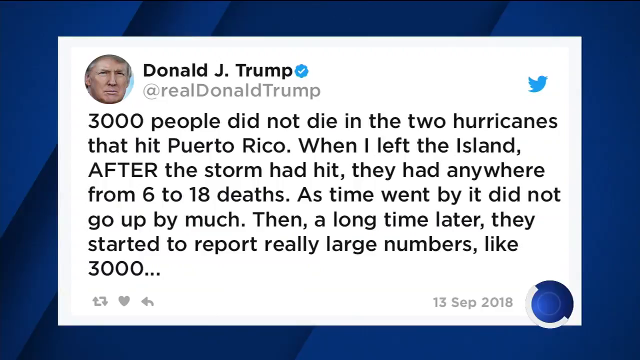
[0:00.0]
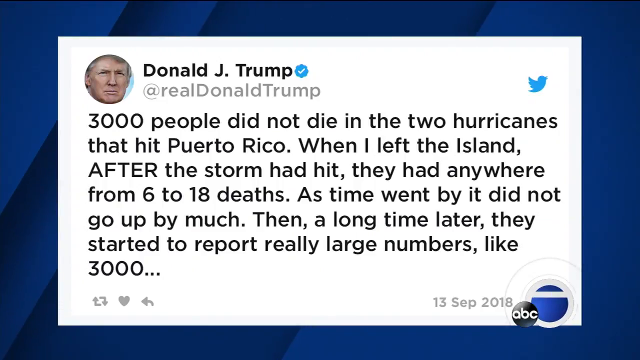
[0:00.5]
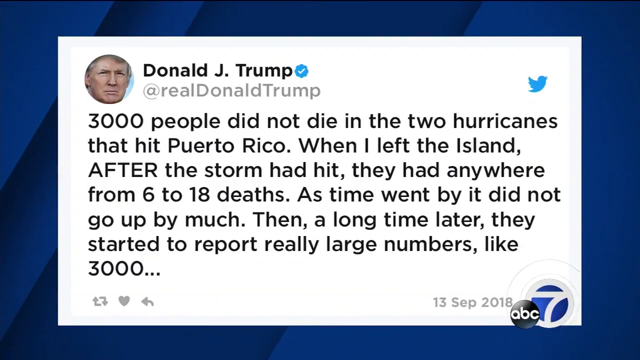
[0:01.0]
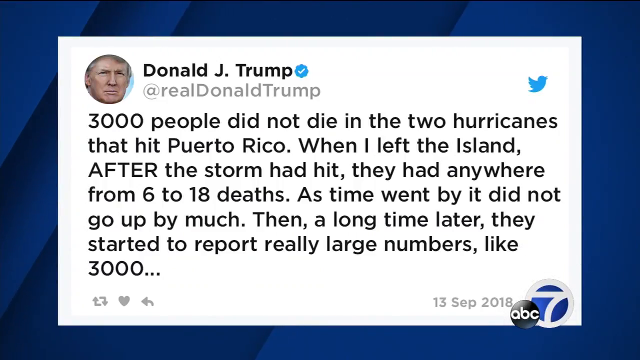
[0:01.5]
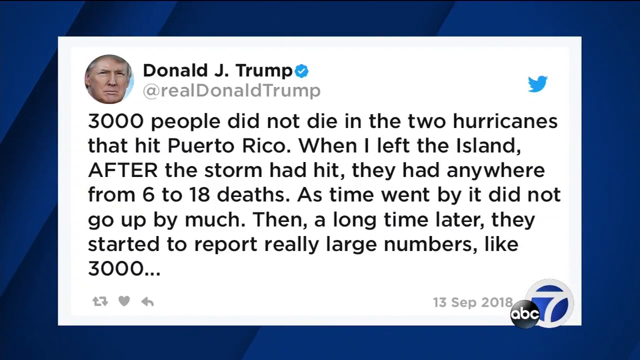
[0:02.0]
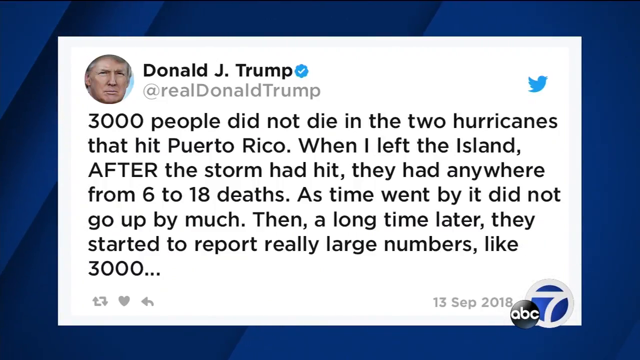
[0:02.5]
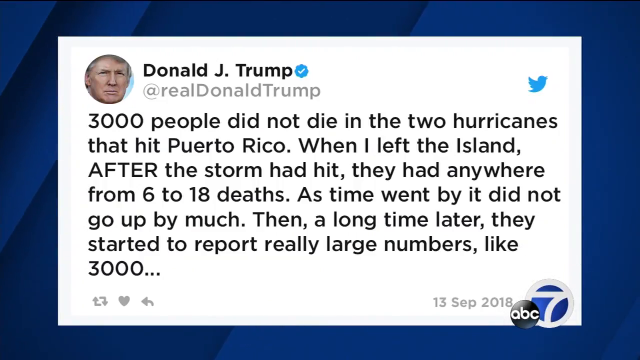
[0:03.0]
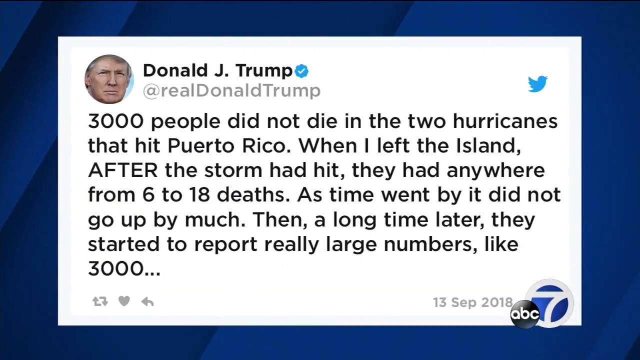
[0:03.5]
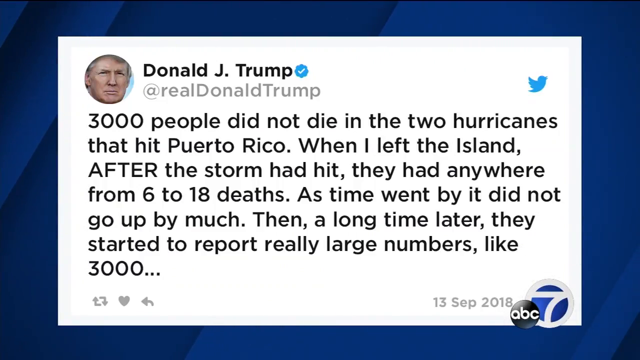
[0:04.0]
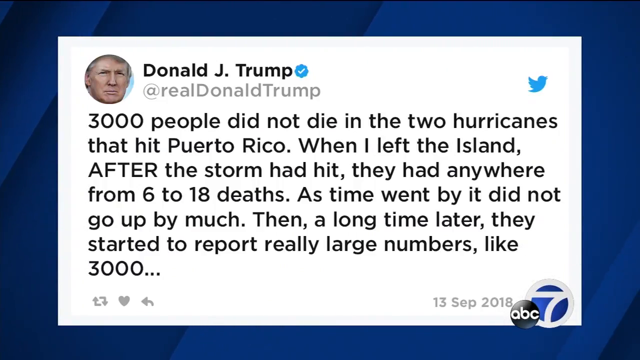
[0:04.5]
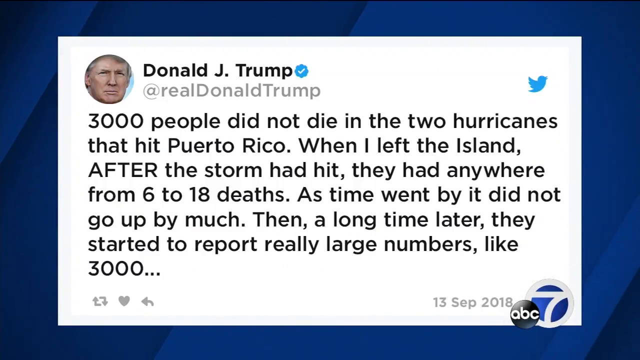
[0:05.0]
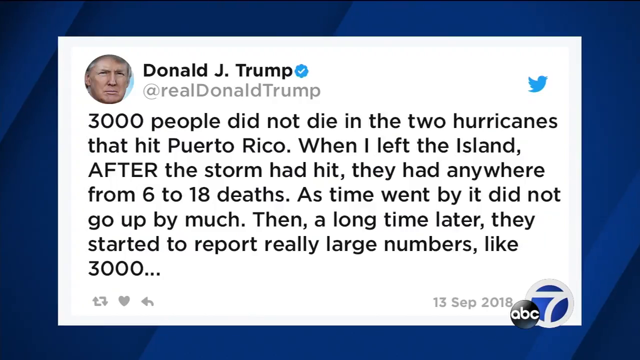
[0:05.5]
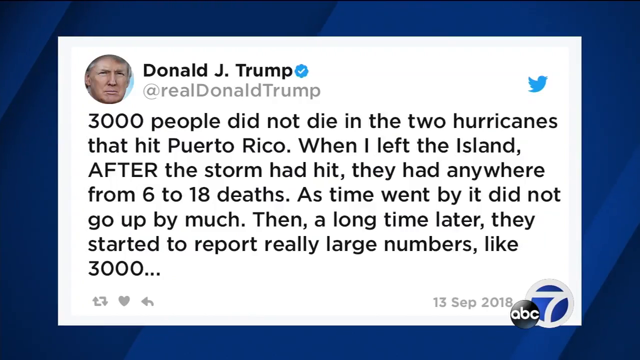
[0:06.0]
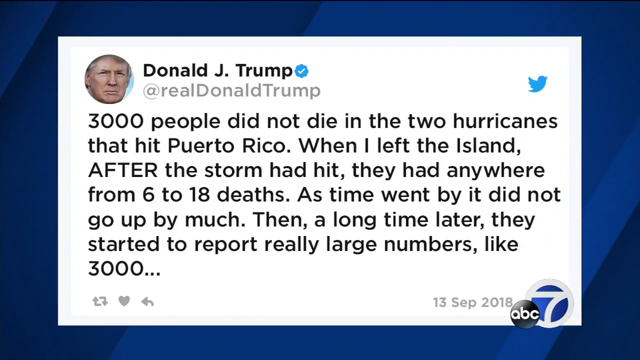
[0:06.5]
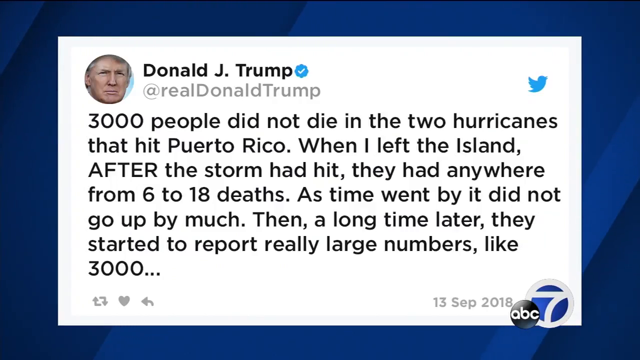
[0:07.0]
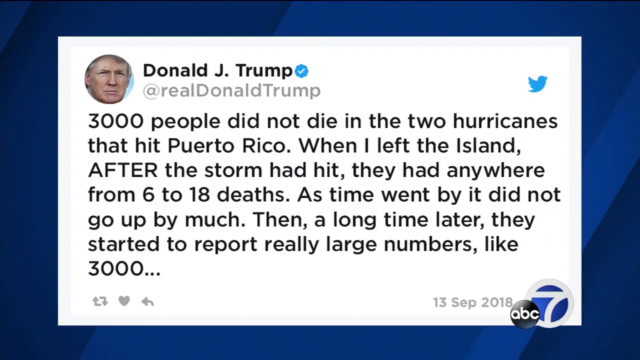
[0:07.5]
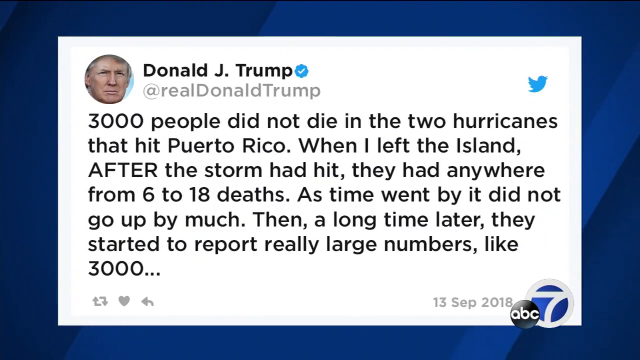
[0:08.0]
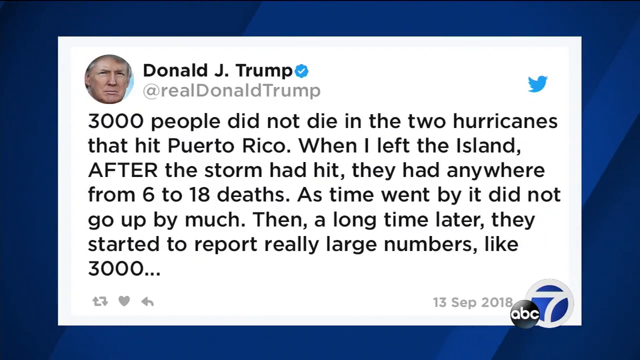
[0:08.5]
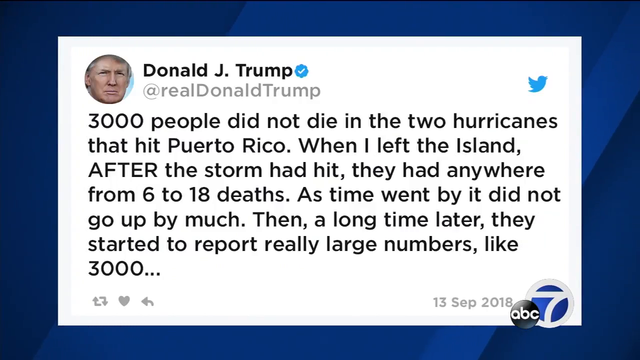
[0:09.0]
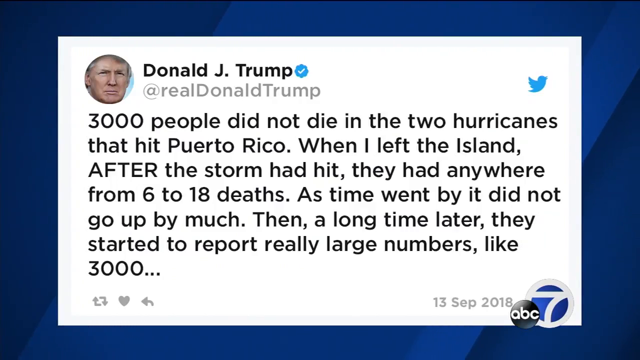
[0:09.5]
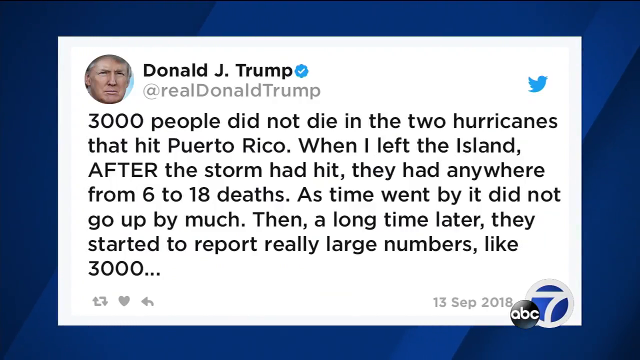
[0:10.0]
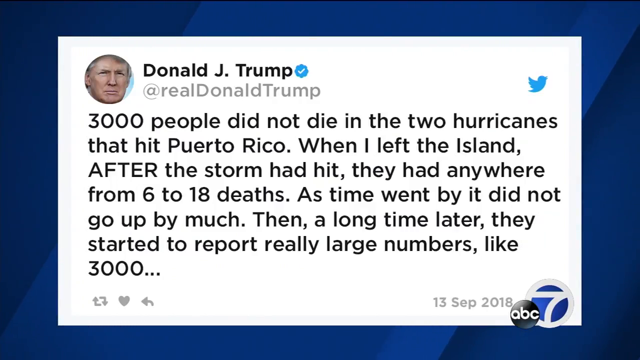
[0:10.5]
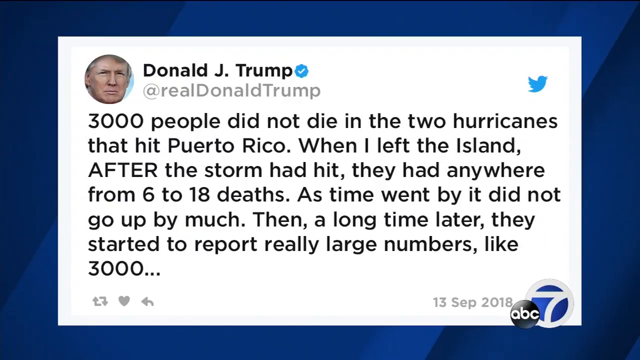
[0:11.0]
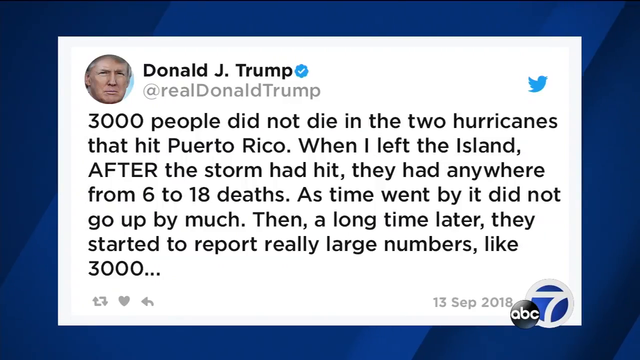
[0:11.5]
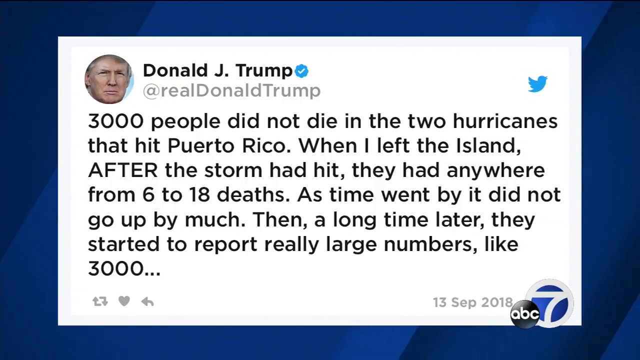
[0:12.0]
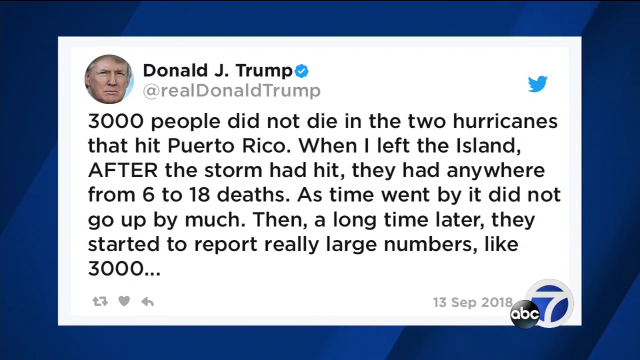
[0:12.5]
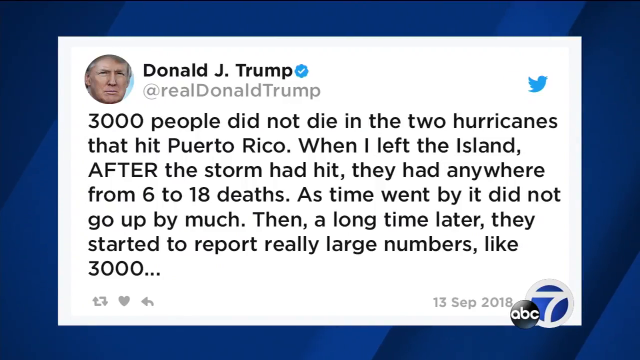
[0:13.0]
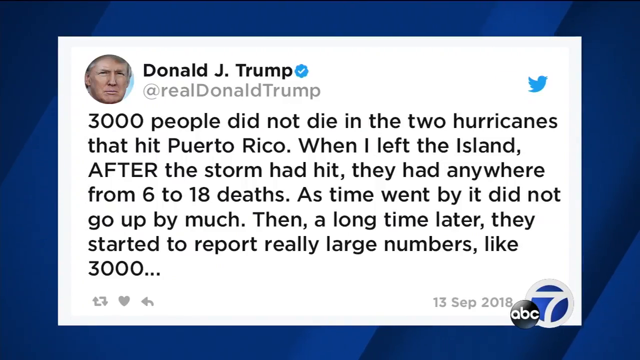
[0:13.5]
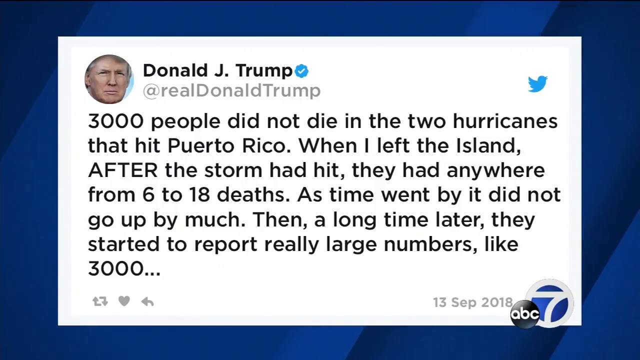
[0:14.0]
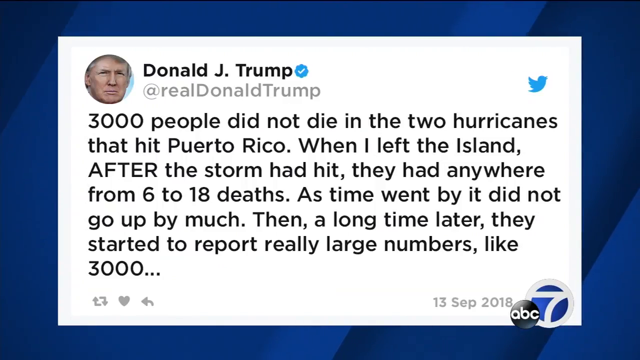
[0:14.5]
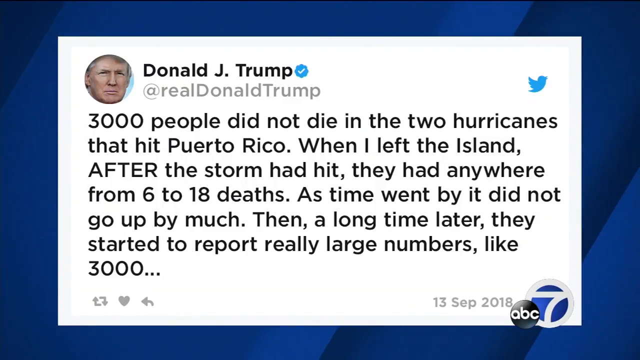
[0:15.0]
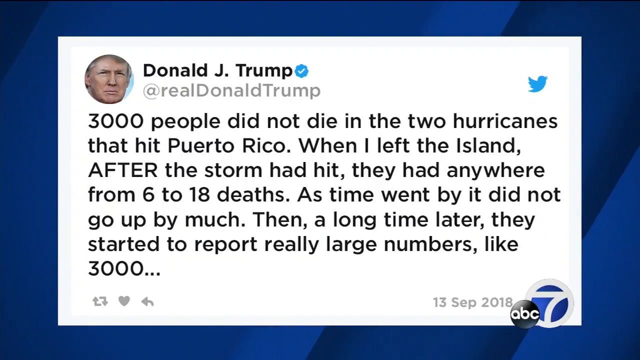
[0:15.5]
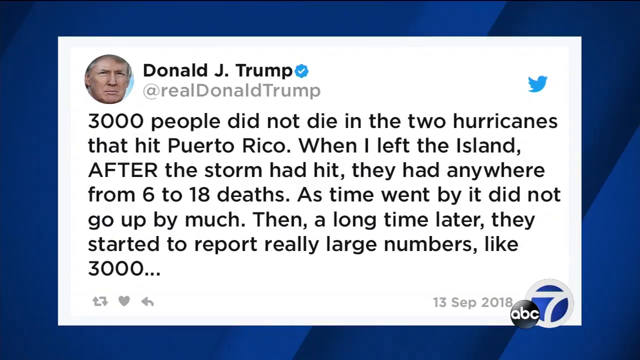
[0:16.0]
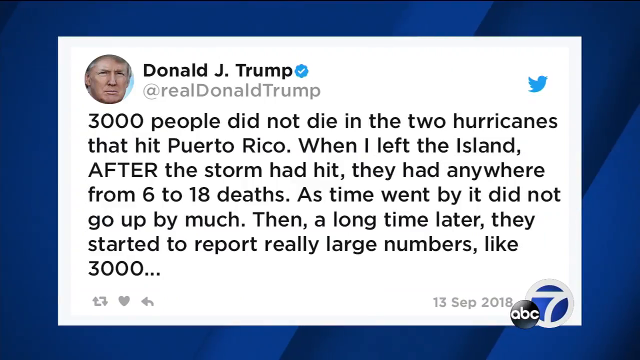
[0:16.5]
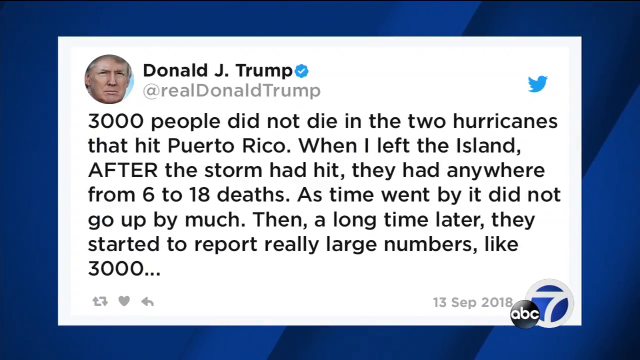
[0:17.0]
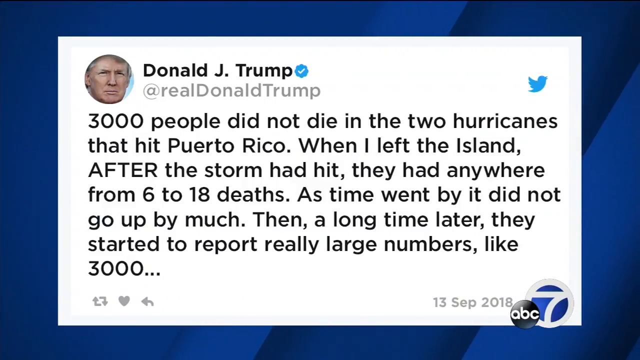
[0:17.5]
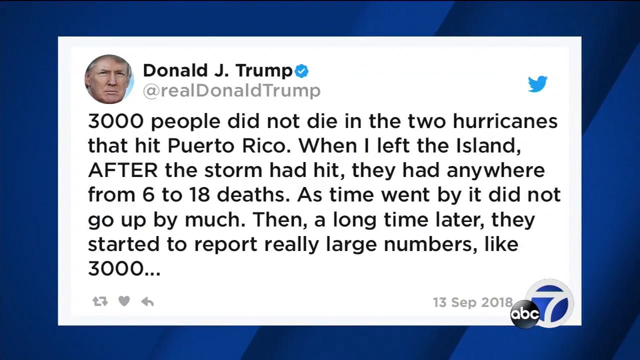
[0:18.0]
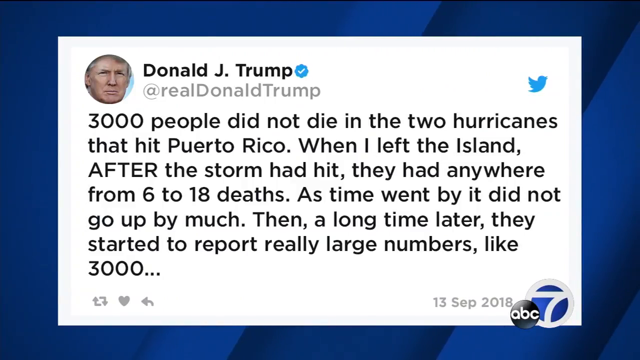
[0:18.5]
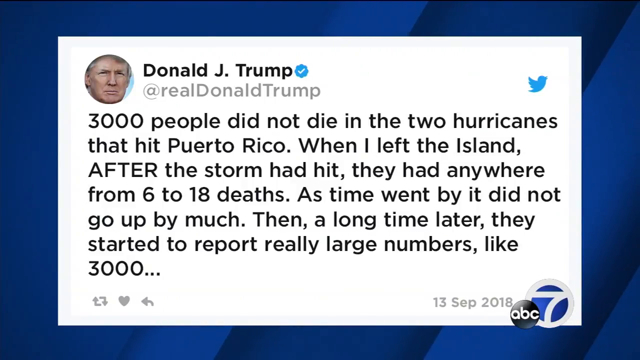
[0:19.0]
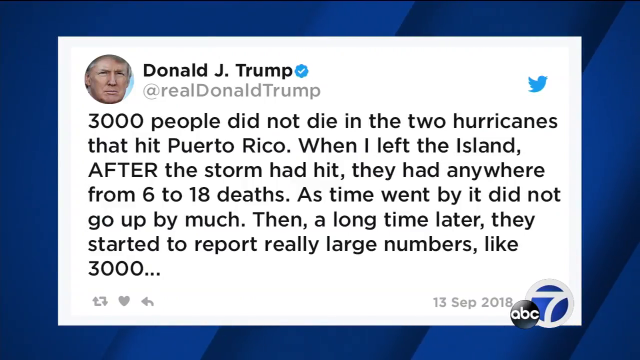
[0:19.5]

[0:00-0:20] The video seems to be from a news broadcast. It opens on a tweet from Donald Trump, with the name "Donald J. Trump" and the handle real Donald Trump at the top and his profile icon to the left. The tweet reads: "3,000 people did not die in the two hurricanes that hit Puerto Rico. When I left the island, after the storm had hit, they had anywhere from 6 to 18 deaths." It continues: "Then, a long time later, they started to report really large numbers, like 3,000." On the left is an ABC logo with the number 7 next to it; the 7 is white on a blue circular background, and the ABC logo is below it to the left. The tweet is shown on a scrolling blue background for the whole shot.